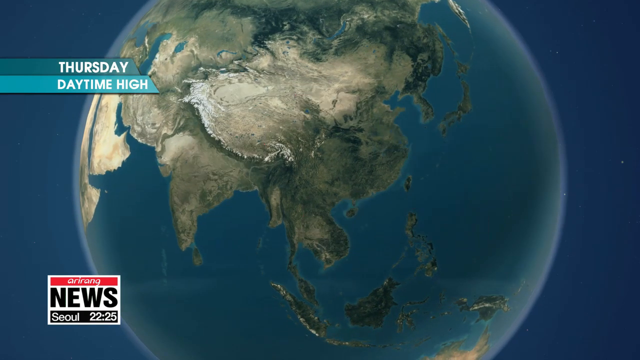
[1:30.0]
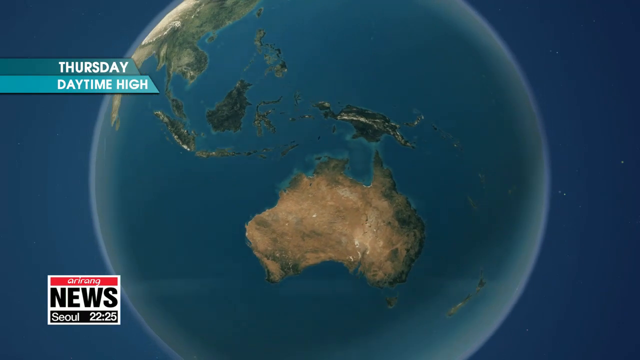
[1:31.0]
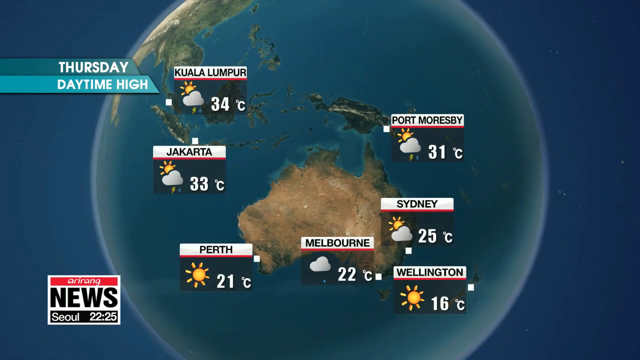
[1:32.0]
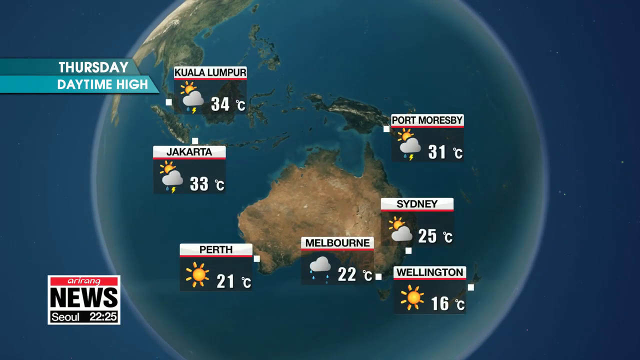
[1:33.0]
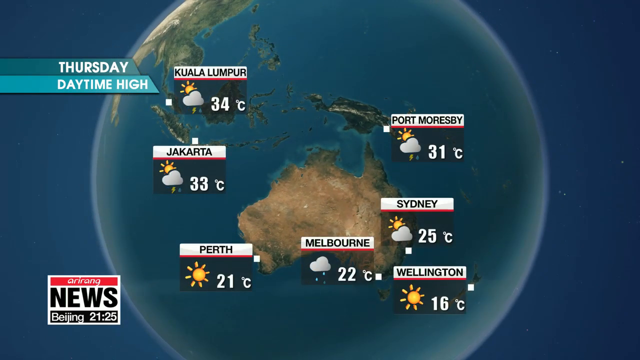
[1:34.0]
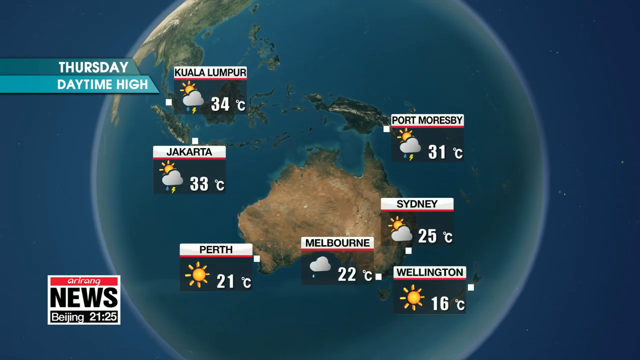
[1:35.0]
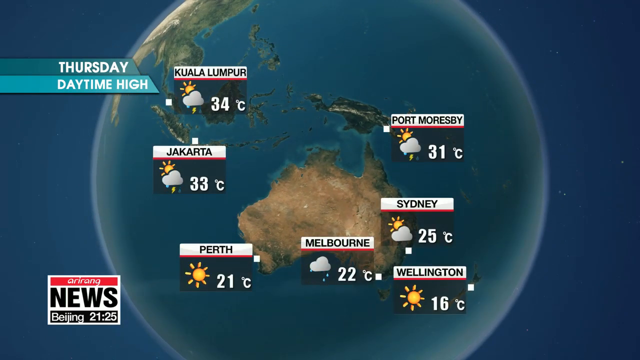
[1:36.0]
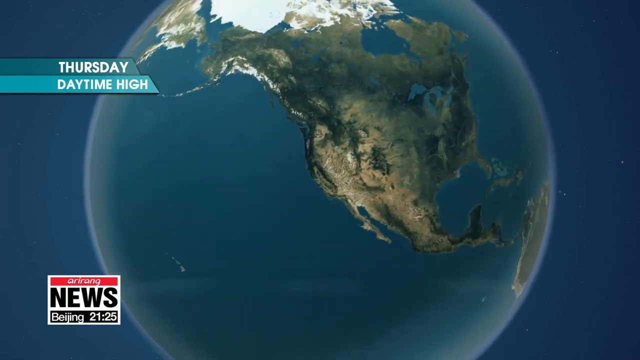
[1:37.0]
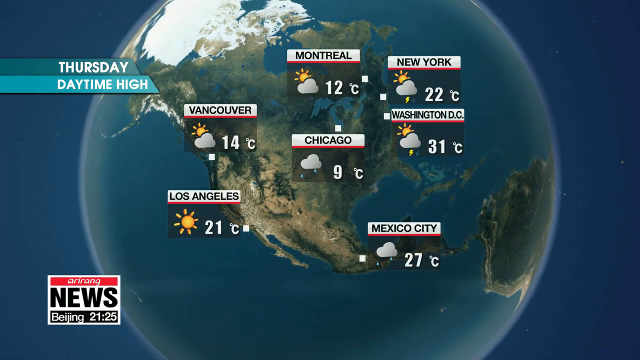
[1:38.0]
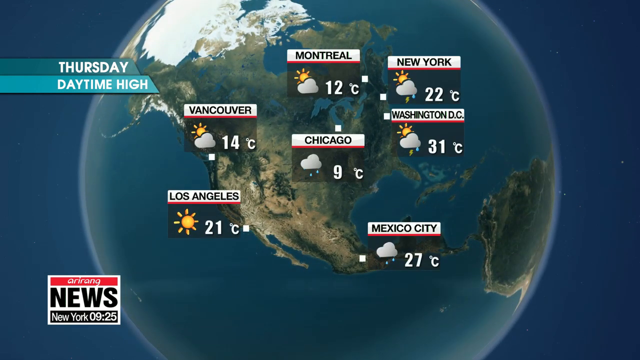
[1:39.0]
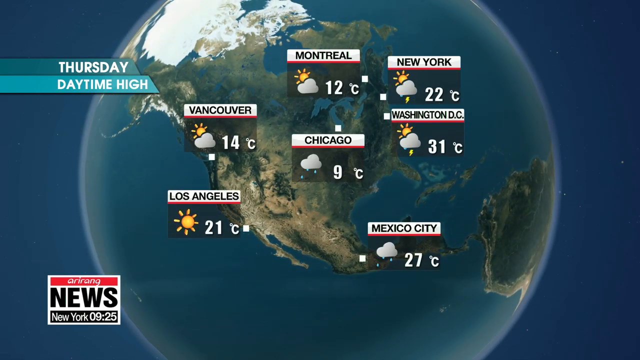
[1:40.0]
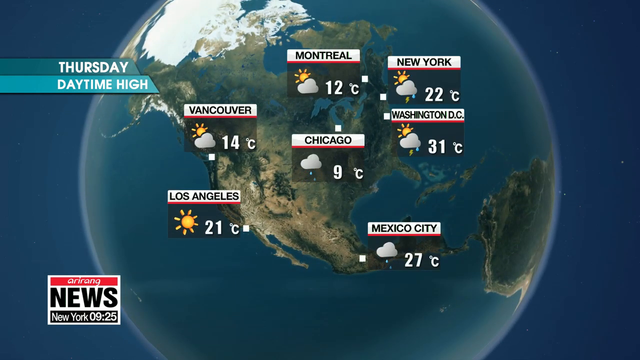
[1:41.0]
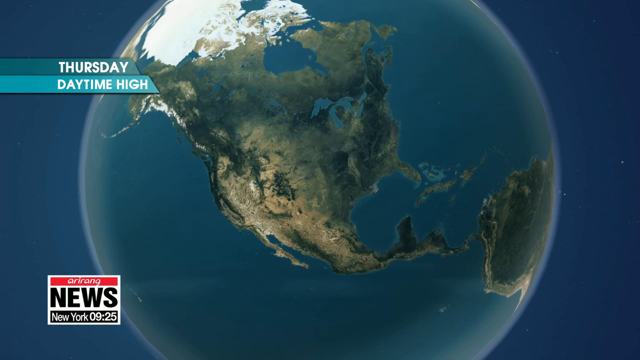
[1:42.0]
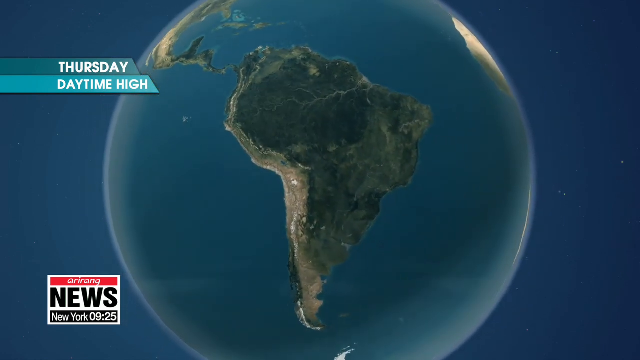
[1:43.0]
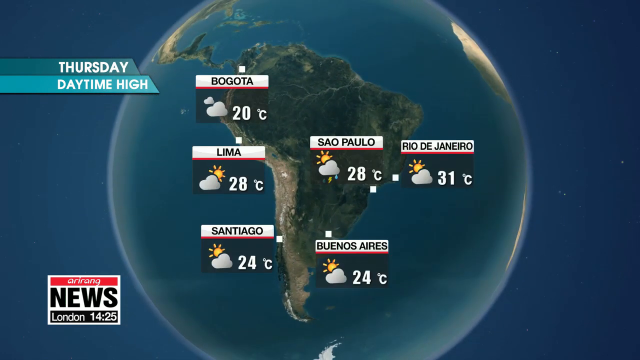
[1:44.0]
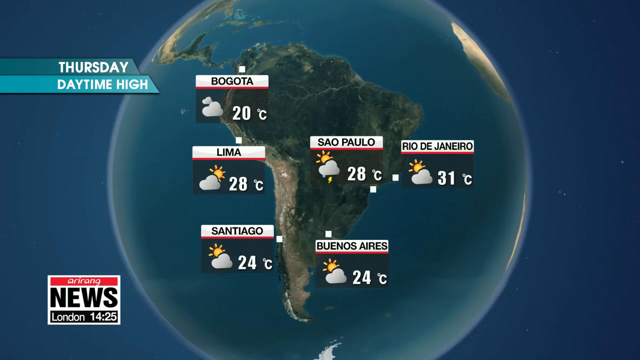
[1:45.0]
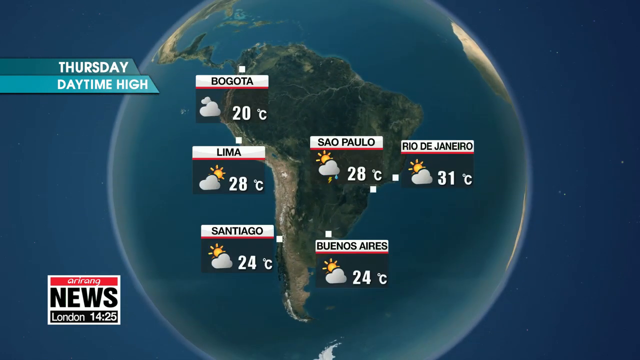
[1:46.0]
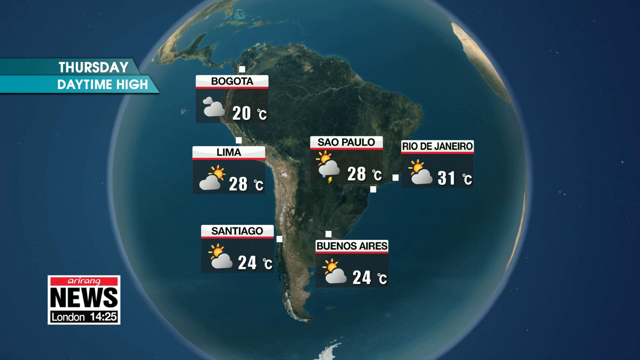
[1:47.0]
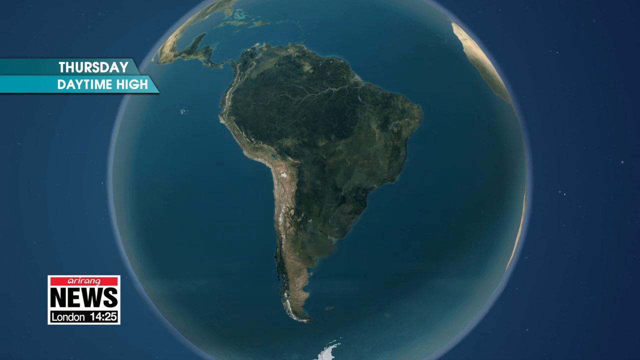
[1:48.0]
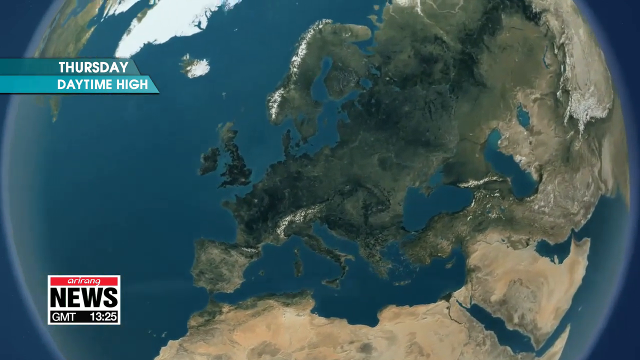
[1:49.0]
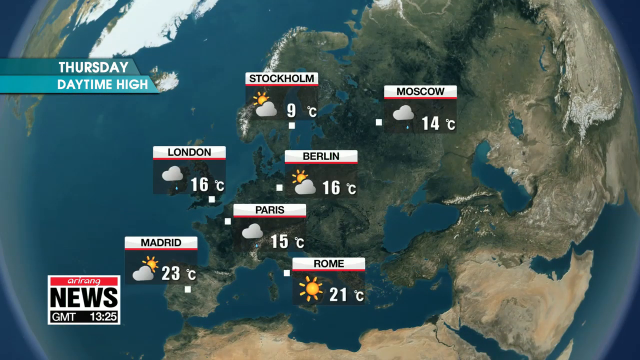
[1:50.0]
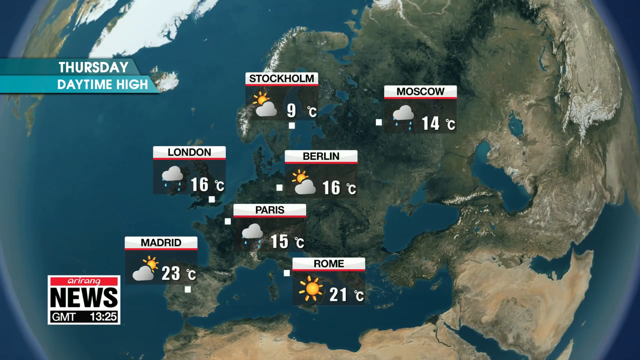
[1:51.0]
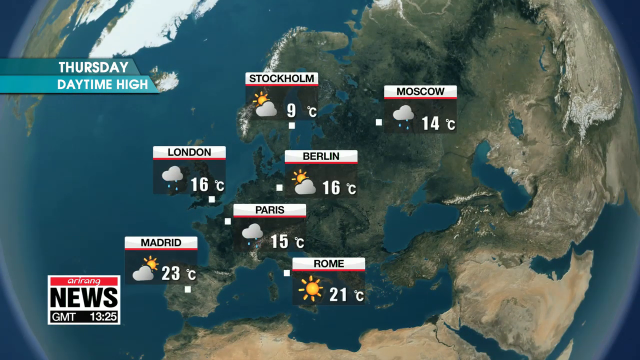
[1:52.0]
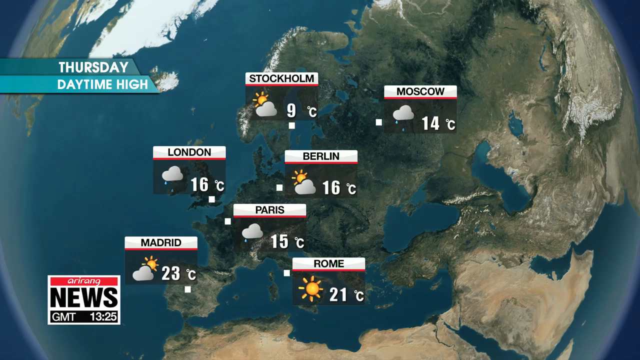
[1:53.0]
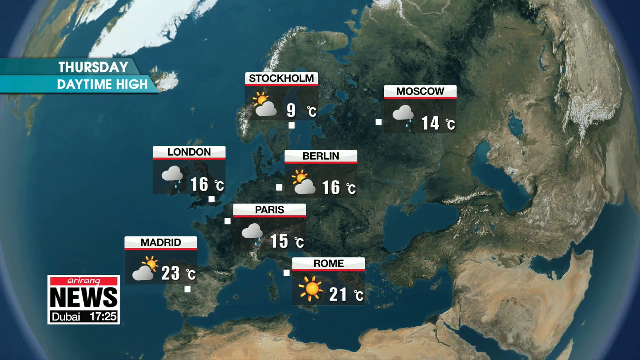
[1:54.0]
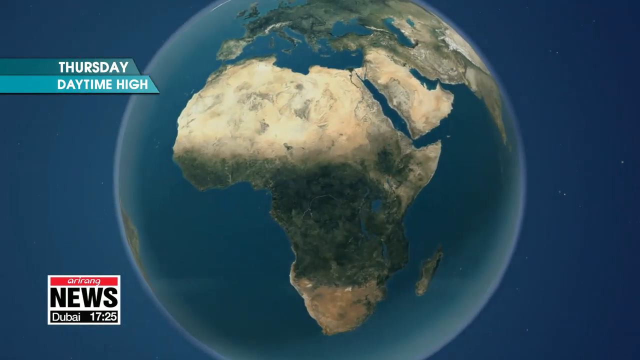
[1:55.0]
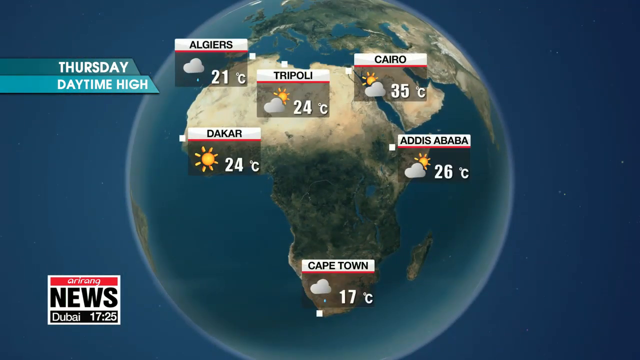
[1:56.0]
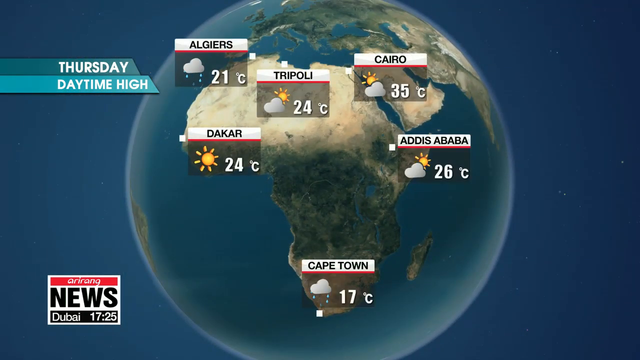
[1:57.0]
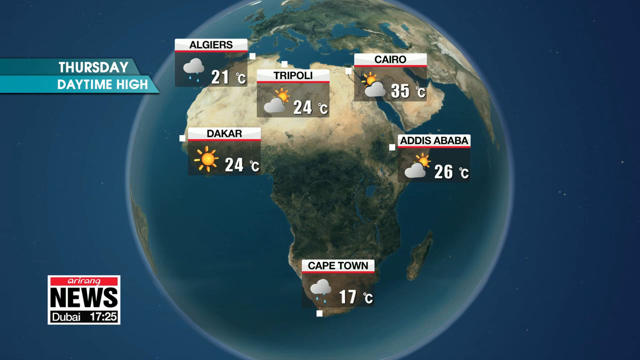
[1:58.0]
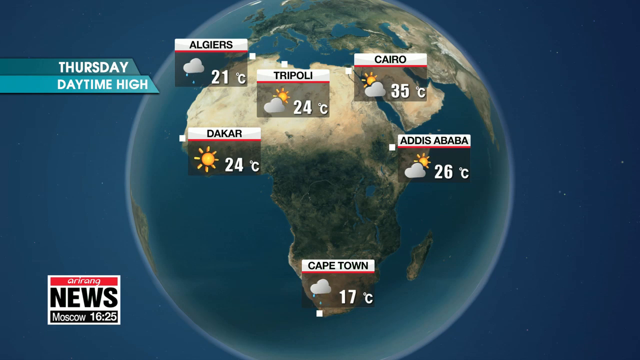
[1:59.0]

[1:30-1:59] A 3D rendered earth shows the continents and the blue ocean, with a slight glow around it and a couple of stars in the blue sky. It rotates up and around to Australia, showing Sydney, Melbourne, Wellington and a few other places. The animation shows rain for Melbourne, with droplets coming from the clouds, and a sun with rotating rays. The globe rotates again to the United States, showing some of the bigger cities including New York and Montreal, and also Mexico City in Mexico. It rotates again, showing Buenos Aires, Sao Paulo and Rio de Janeiro, then Stockholm, Moscow and a few others. It zooms out and shows Cairo, Cape Town and a few other places in Africa, giving a general, not fully detailed overview of regions everywhere.